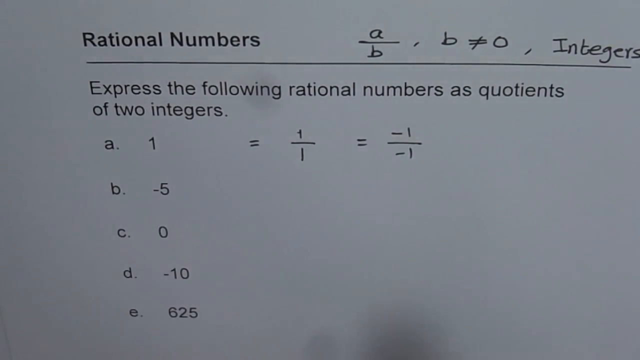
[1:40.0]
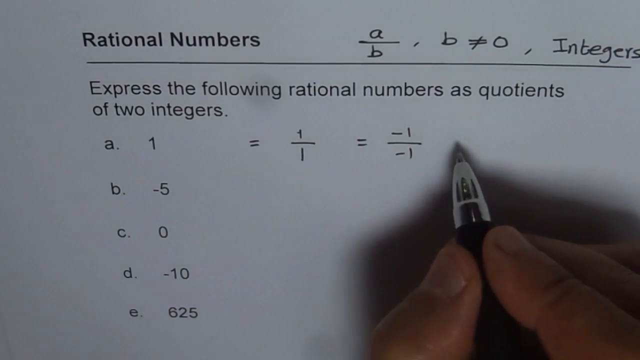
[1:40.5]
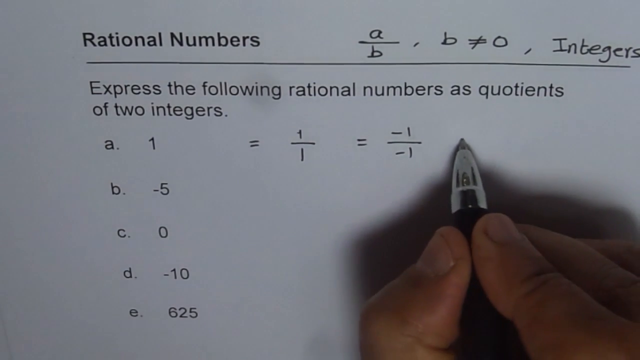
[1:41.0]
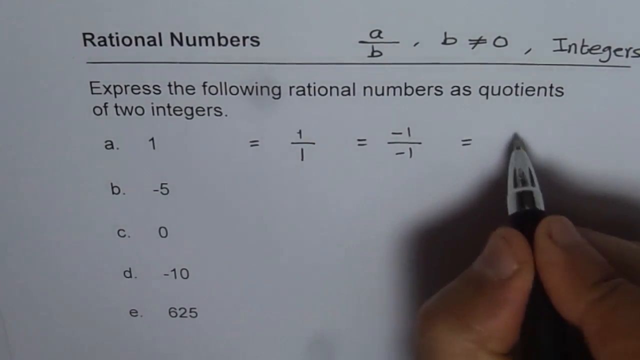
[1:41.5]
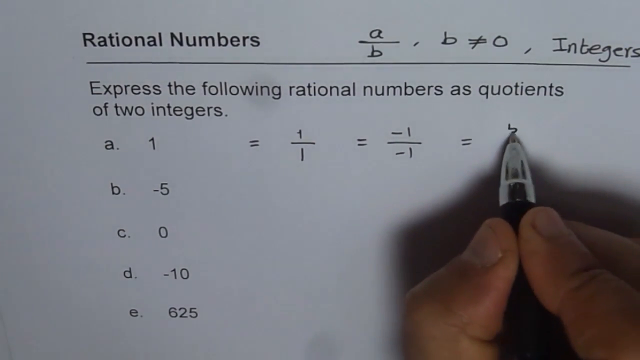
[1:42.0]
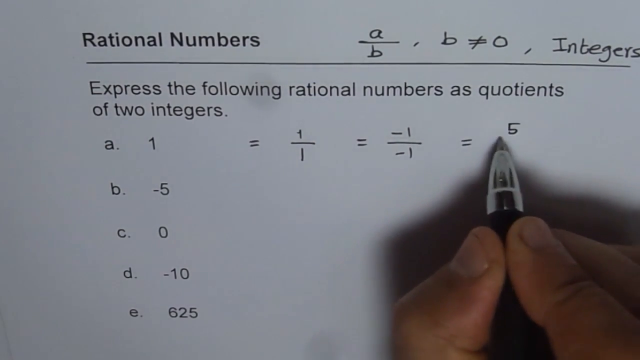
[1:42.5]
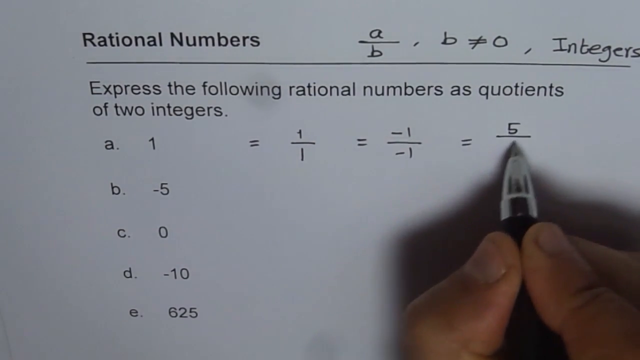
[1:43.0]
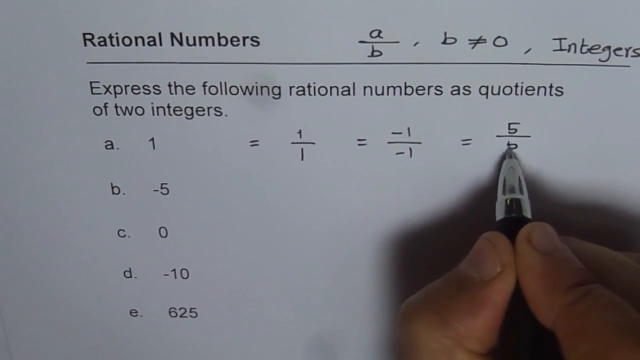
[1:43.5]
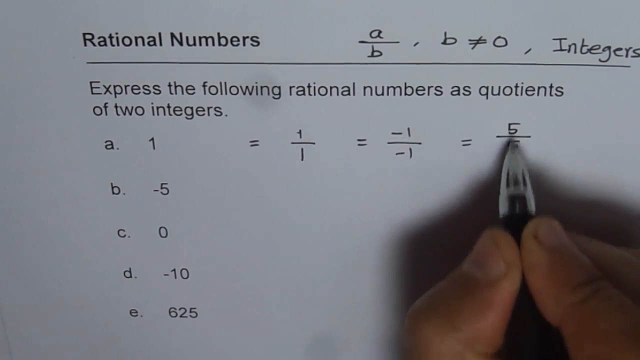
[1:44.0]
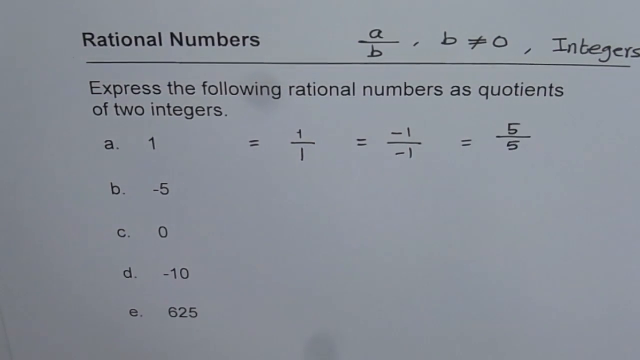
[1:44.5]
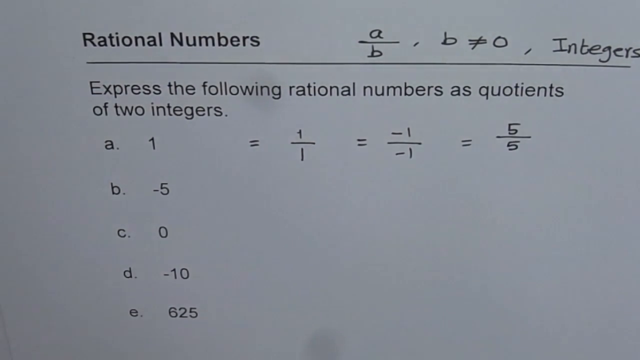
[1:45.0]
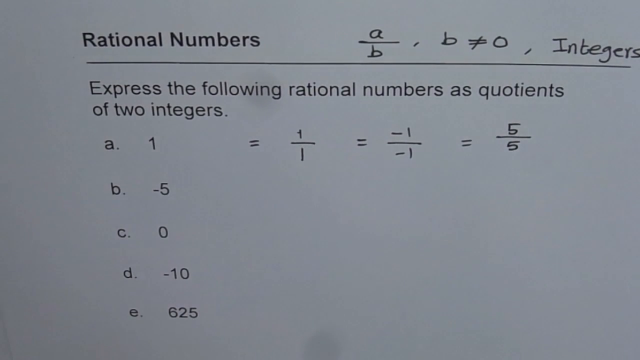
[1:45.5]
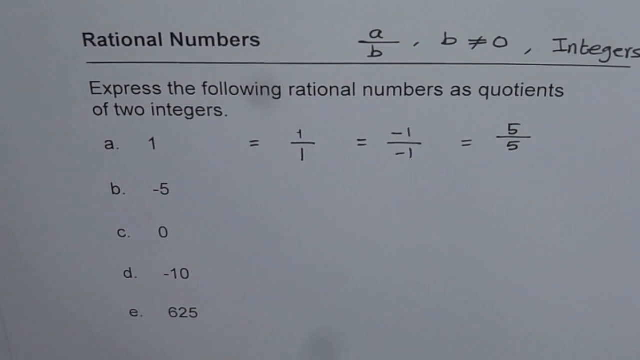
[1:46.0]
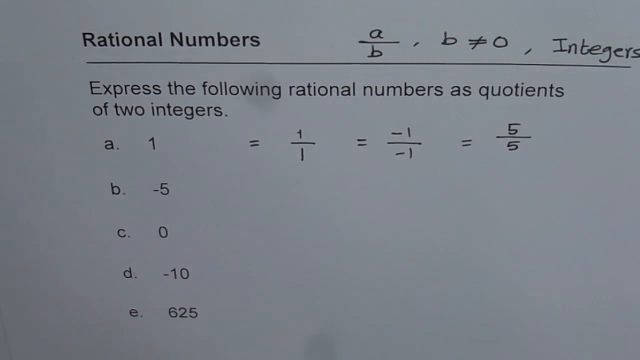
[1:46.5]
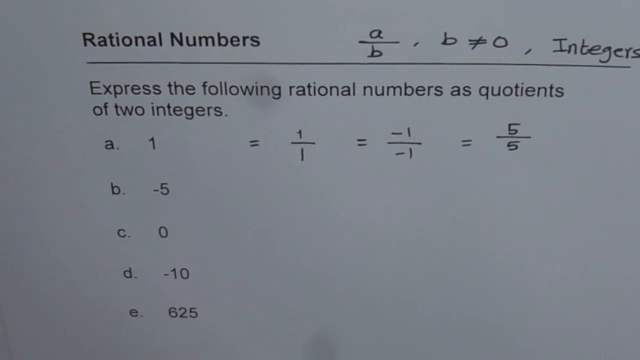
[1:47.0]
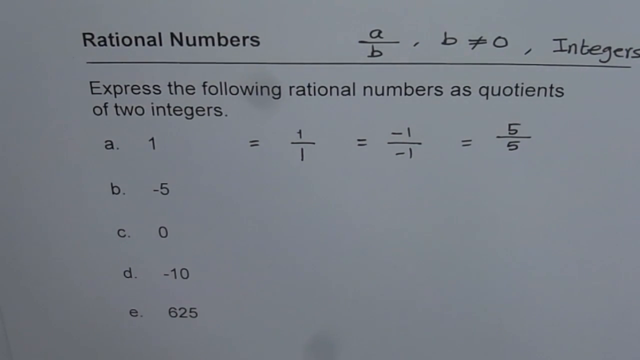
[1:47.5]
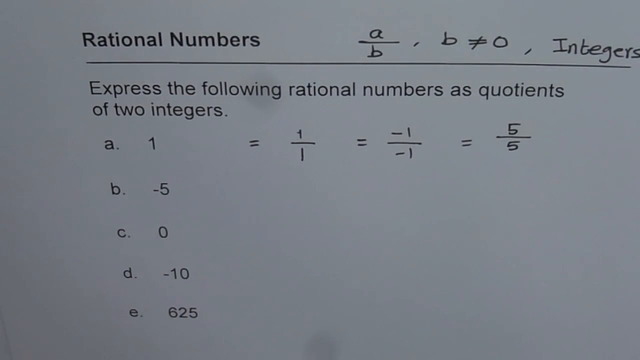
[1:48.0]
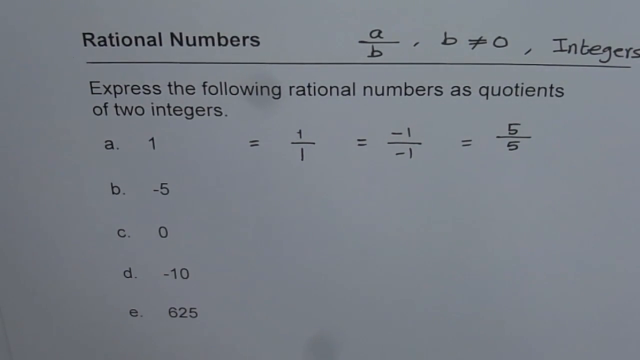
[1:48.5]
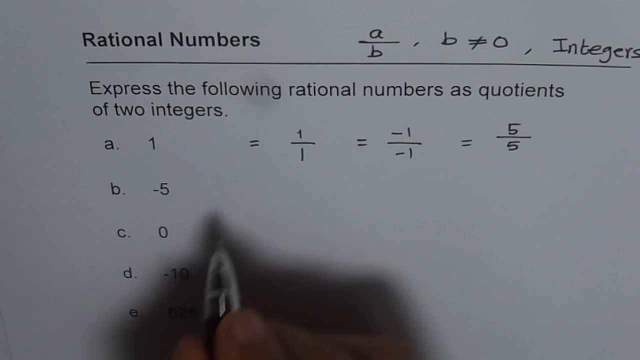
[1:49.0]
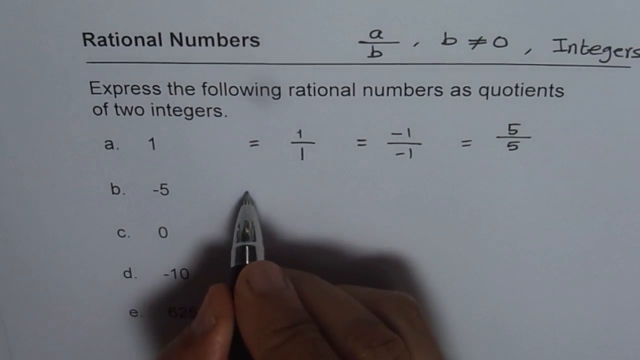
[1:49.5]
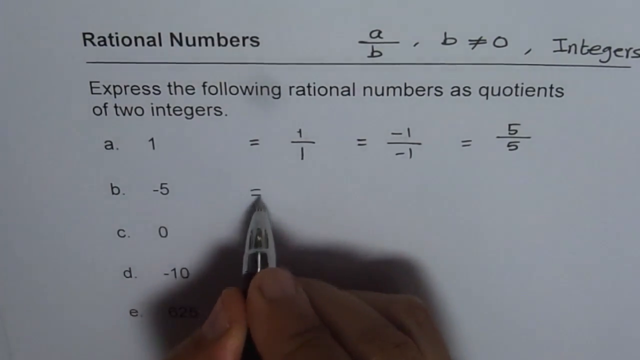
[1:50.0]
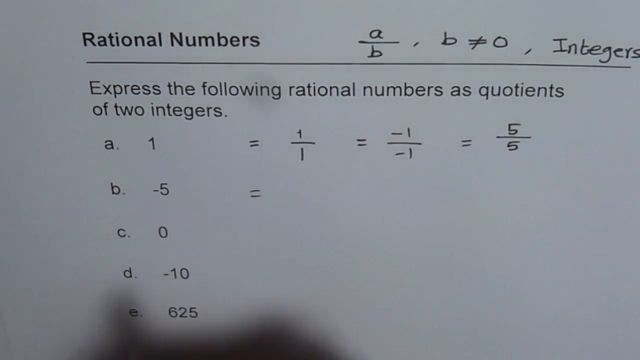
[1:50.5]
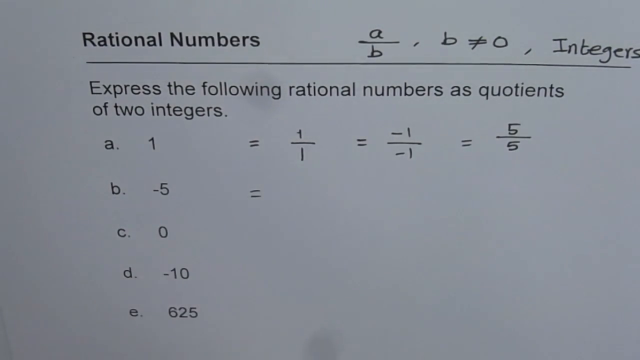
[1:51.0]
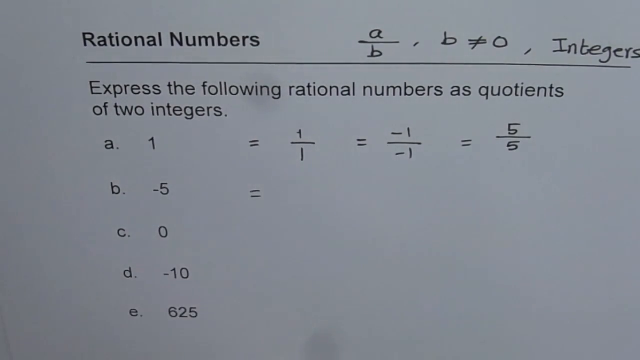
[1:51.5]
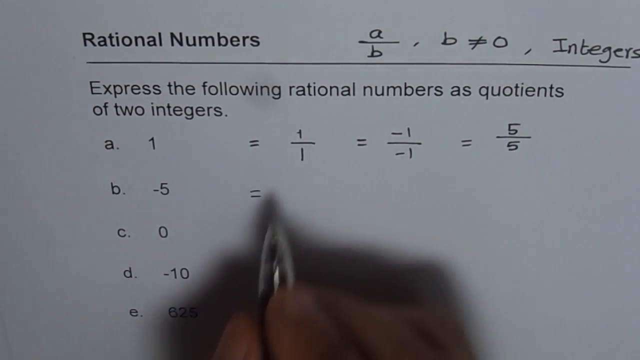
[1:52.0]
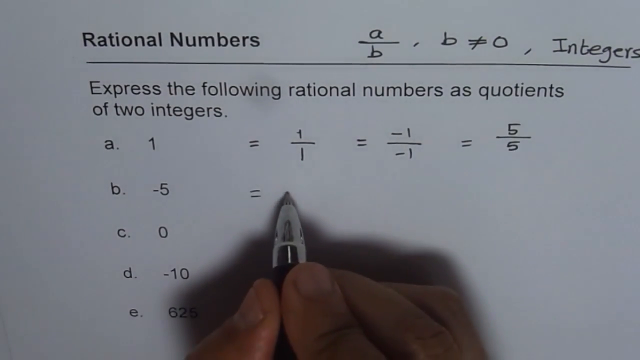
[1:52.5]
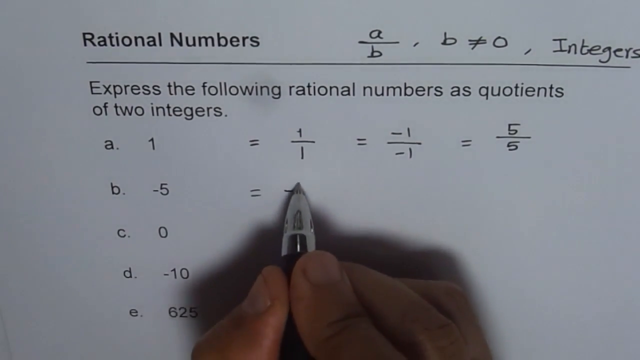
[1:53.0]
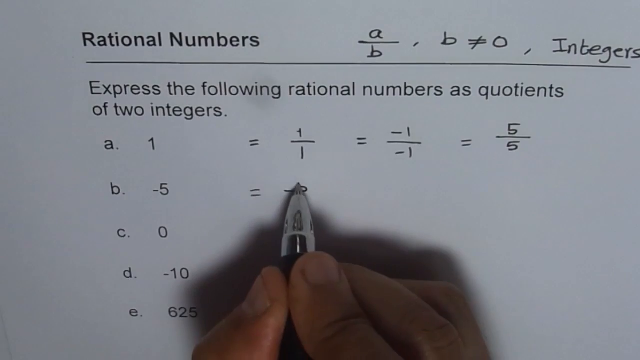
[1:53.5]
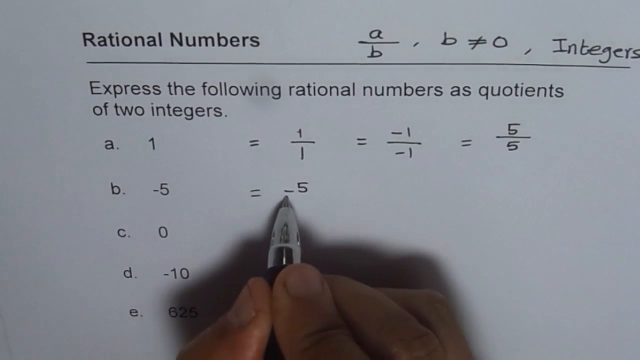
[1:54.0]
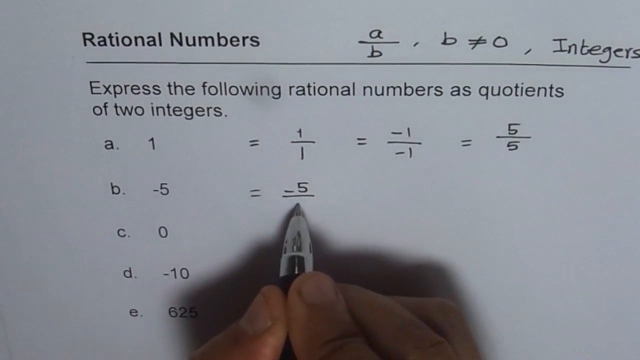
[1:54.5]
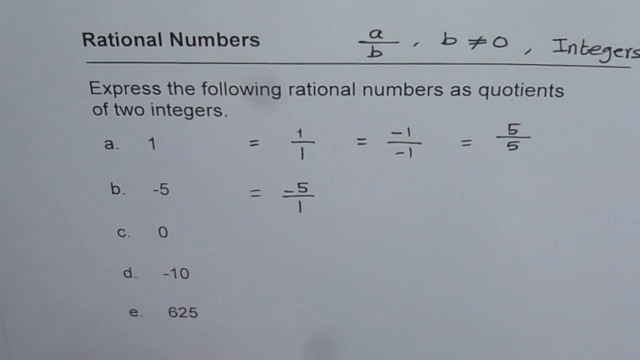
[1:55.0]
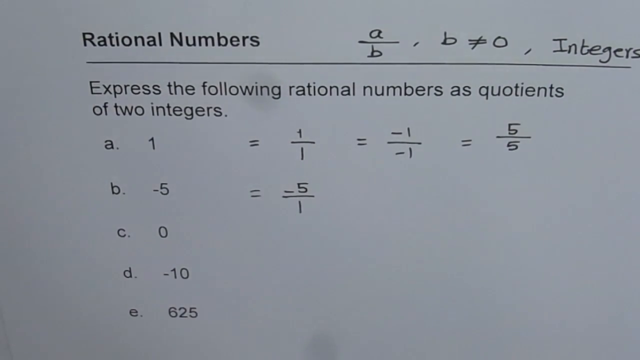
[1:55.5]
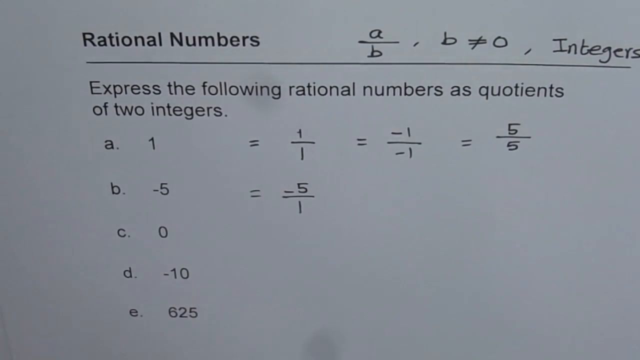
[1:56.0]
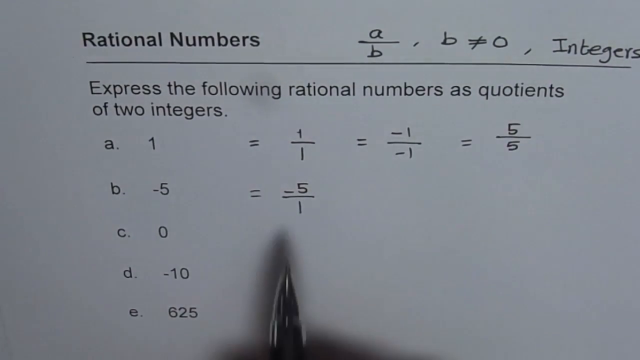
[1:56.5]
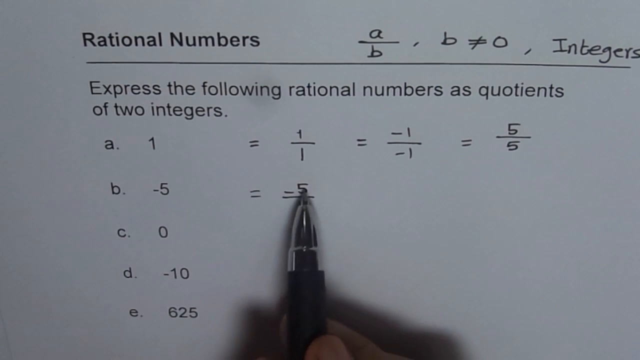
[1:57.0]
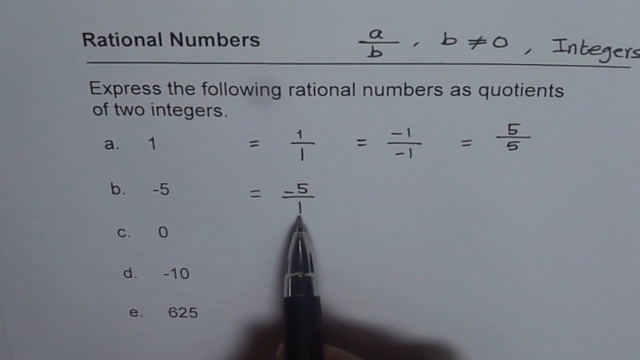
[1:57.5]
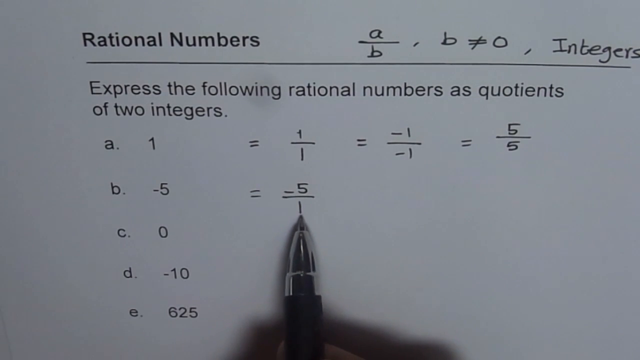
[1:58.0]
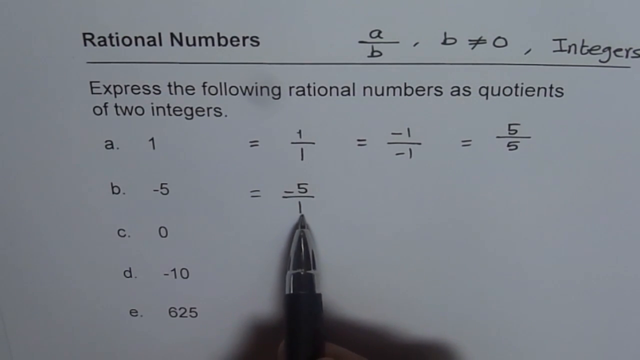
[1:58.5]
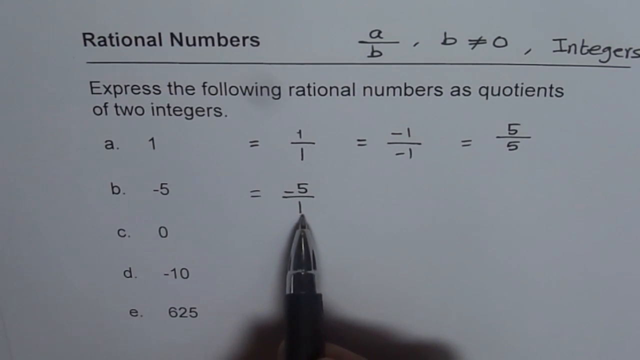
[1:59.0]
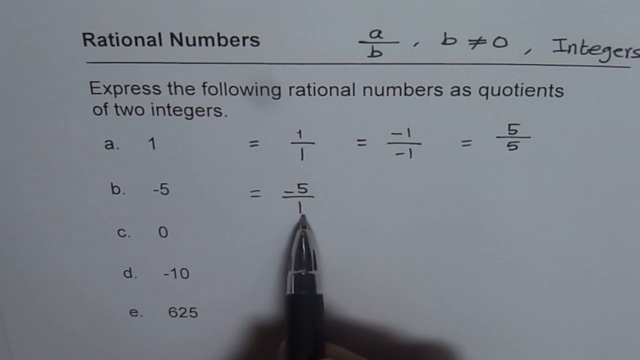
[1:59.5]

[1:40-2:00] The hand moves back into the picture and continues working on item A, the number 1. He writes another equals sign to the right of the minus 1 over minus 1, writes 5 over 5, and moves the hand away to the bottom of the screen. The hand enters again and taps the minus 5, which is to the right of B, the next number to express as a quotient of two integers. An equals sign is written, and he moves the hand back into the picture and writes minus 5 over 1. He points first to the minus 5, then to the 1, and then withdraws the hand.